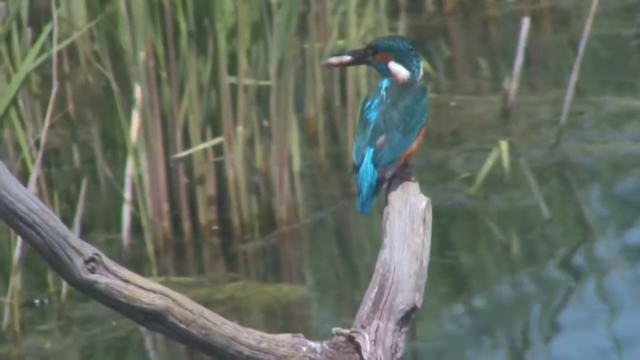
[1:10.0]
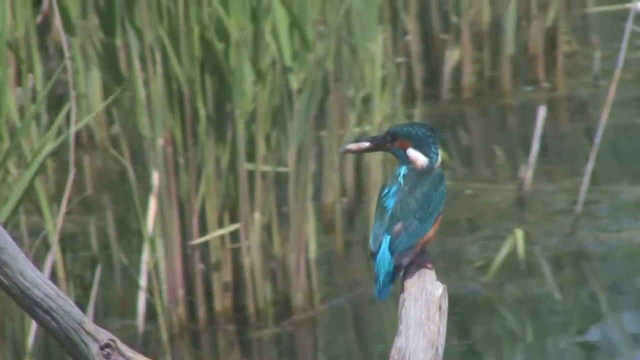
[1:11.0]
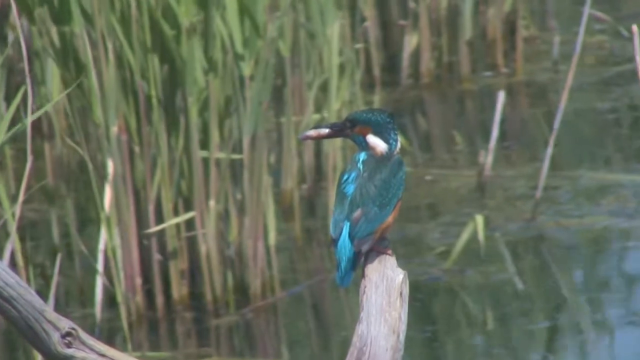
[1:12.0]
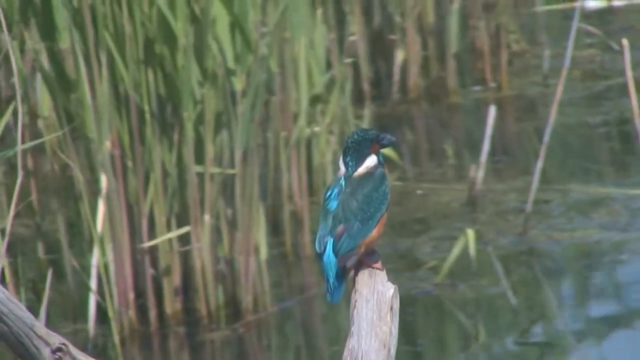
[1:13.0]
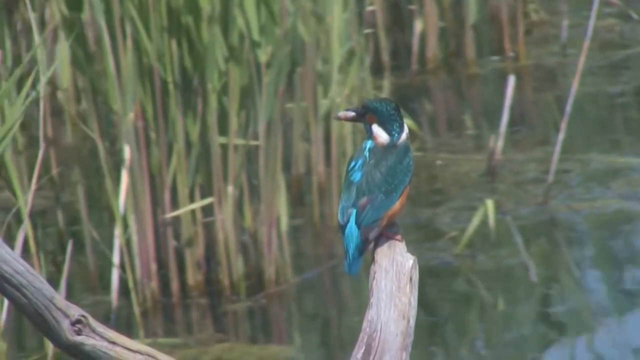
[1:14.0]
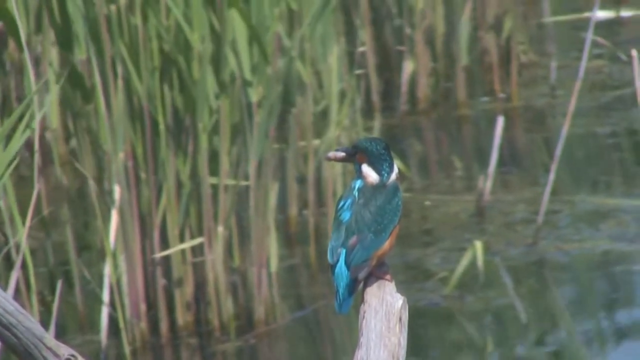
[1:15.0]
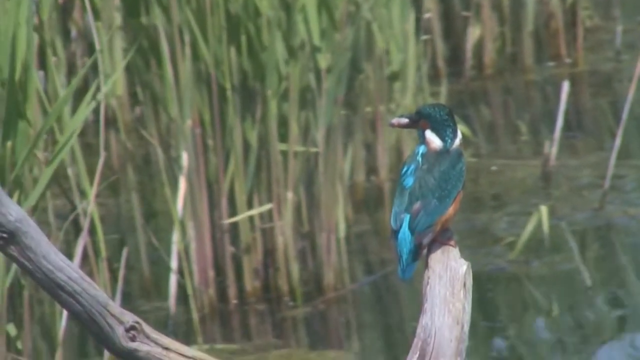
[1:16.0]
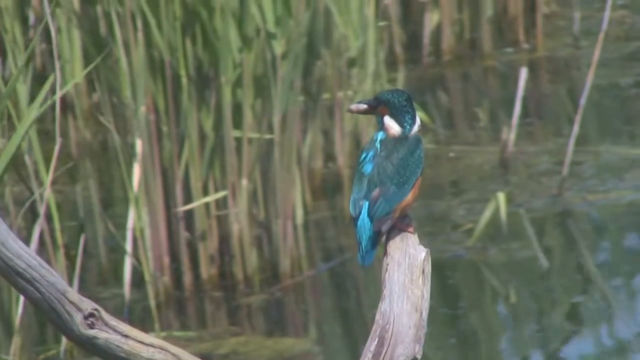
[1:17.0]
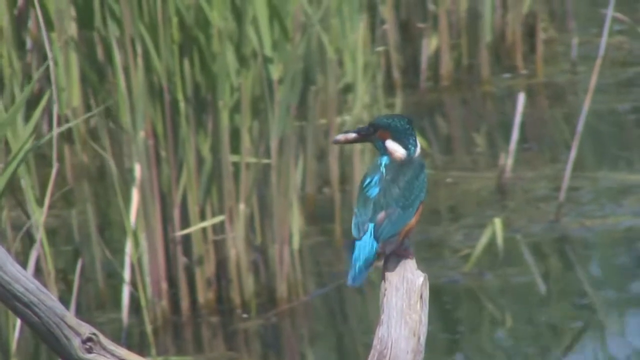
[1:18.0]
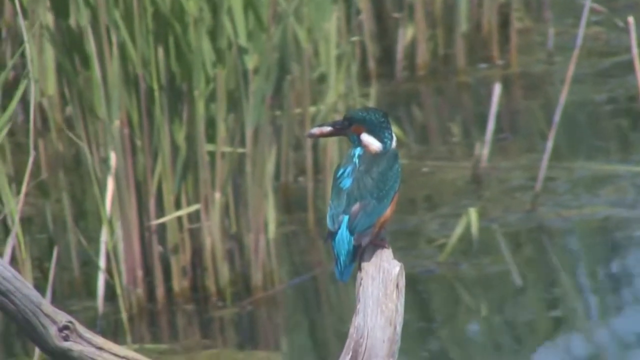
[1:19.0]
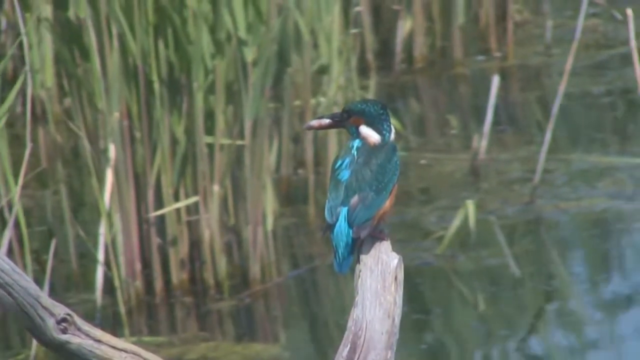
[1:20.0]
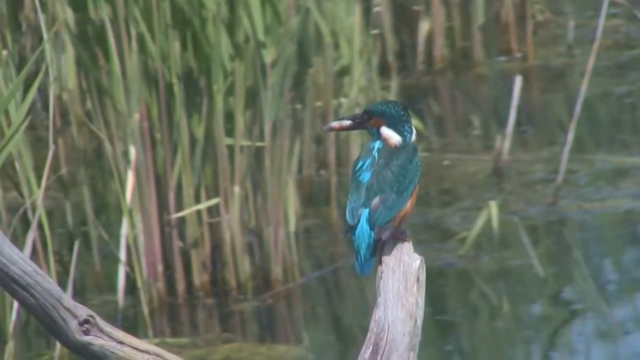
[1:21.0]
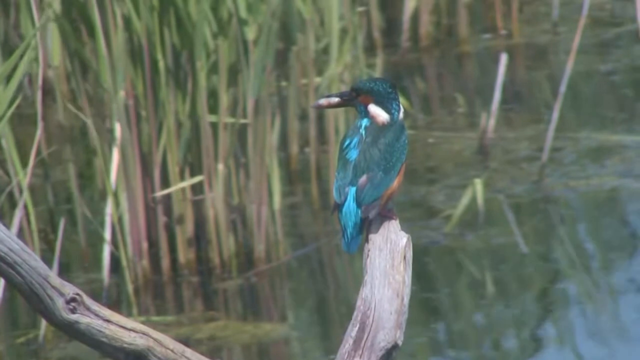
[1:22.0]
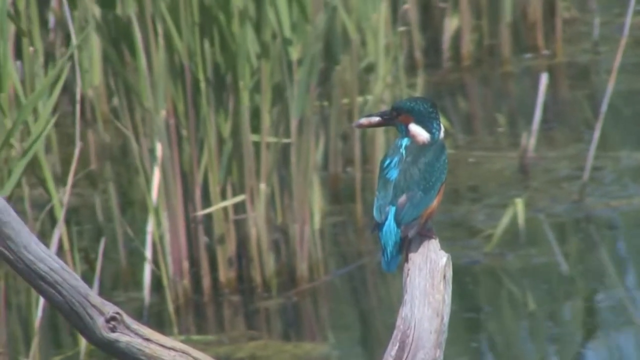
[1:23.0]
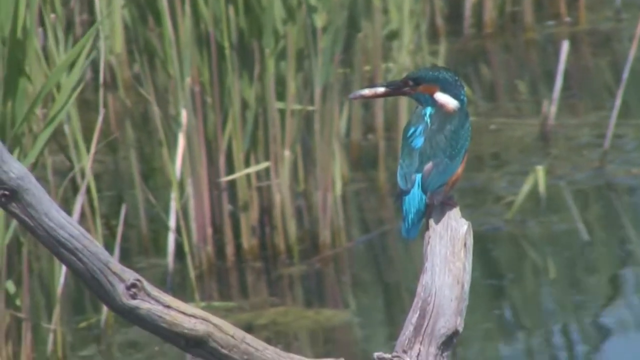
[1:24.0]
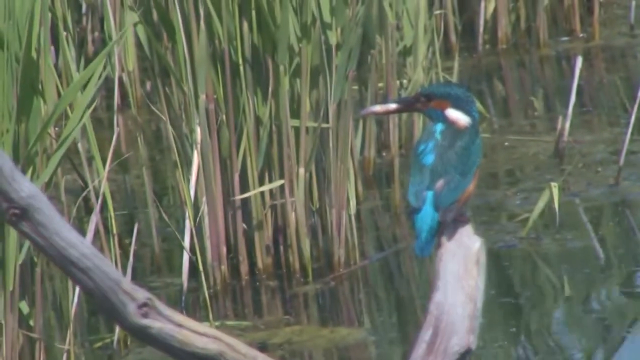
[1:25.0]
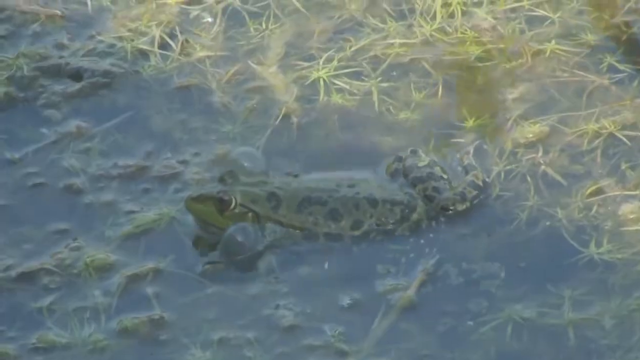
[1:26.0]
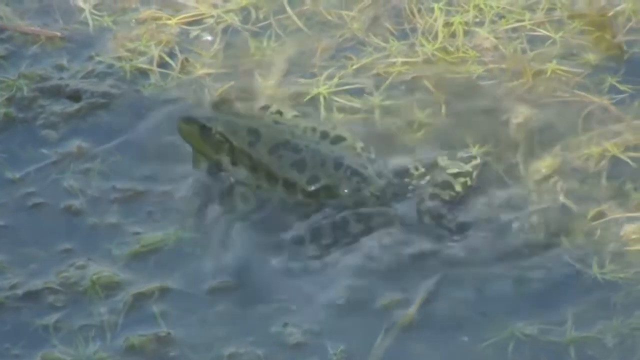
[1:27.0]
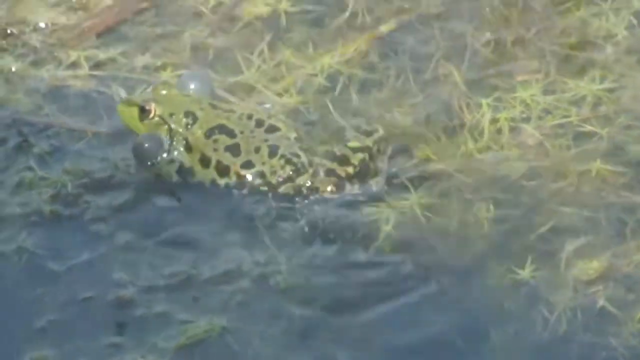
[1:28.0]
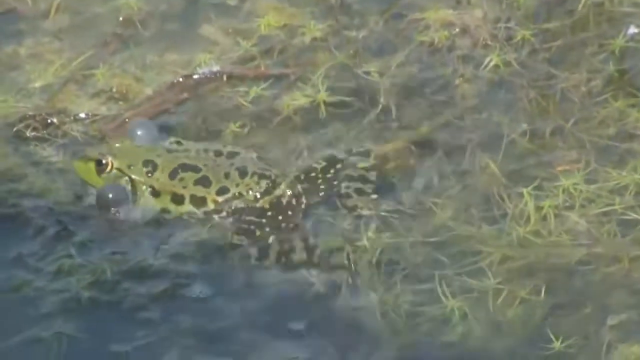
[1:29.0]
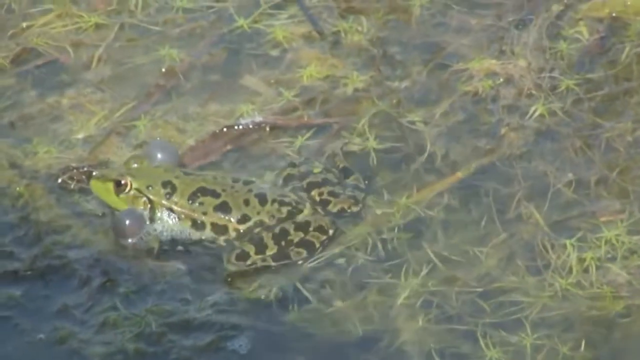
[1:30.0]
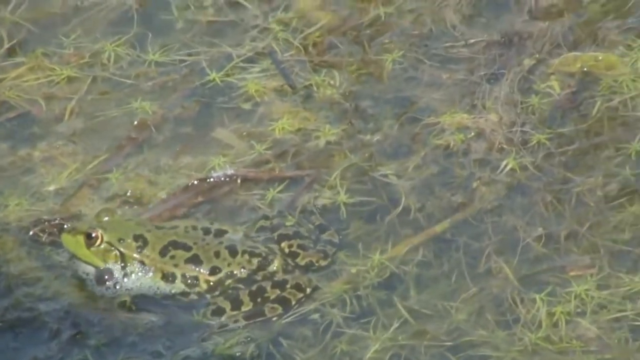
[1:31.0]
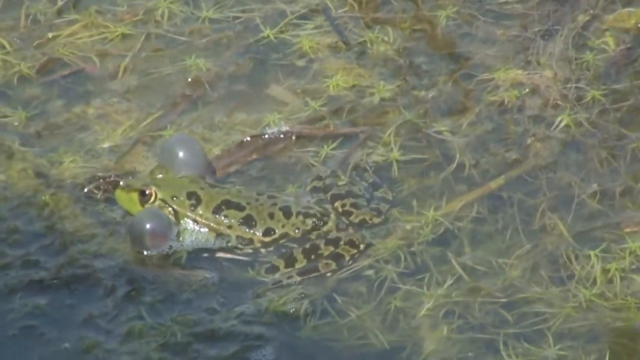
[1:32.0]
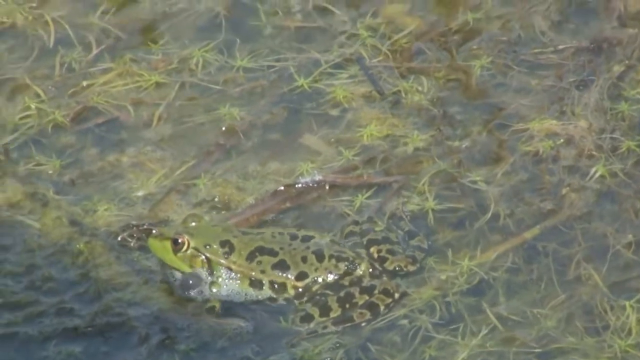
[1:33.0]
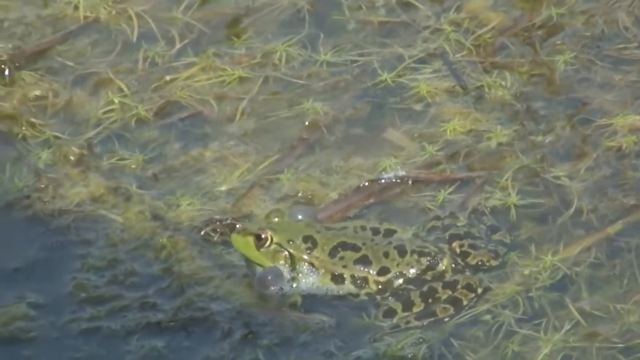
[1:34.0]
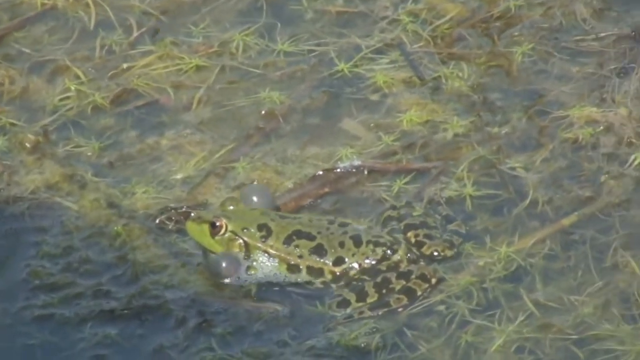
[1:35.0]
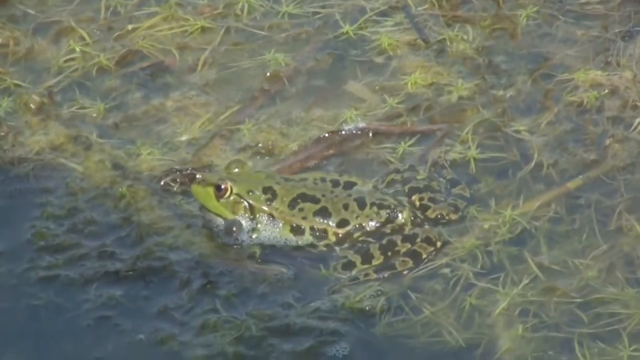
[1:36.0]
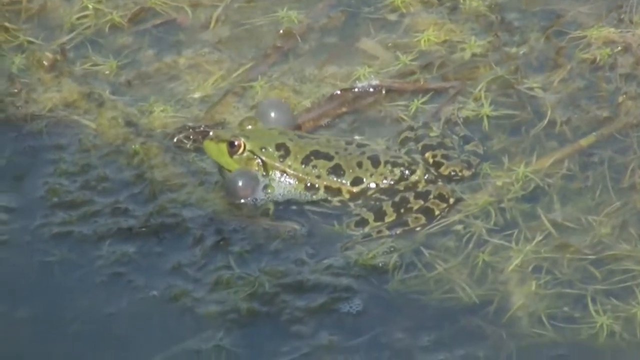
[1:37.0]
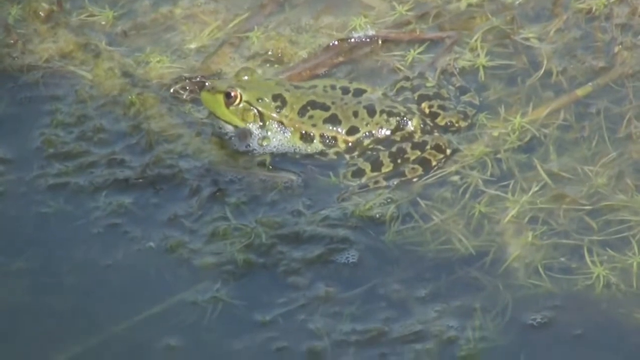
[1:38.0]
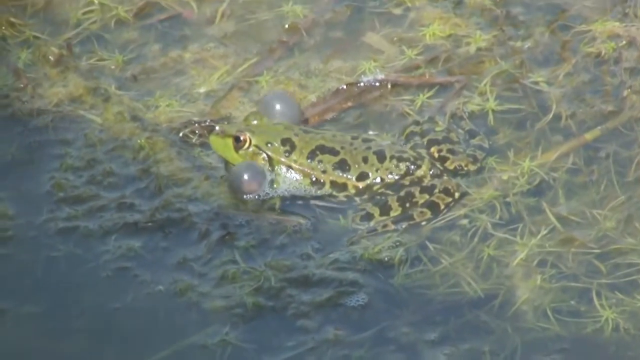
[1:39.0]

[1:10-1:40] A kingfisher is on part of a tree, looking into the water, with big, tall green reeds in the background. It is a variety of colours: blue, turquoise, light blue and some brown. Near the base of its head are some small white feathers; its head is mostly blue with a little brown near its eye, and its beak appears to be both black and white. The kingfisher looks from side to side as it sits above the water, bobbing and jumping around a little on the piece of wood without moving very far, and turning further to its left. The scene then changes to a completely different animal, a frog moving slowly through water that seems to contain a lot of plant life or grass. The frog is clearly visible. As it breathes, bubble-like sacs, like lungs or gills, rise, inflate and subside as it moves, and eventually it stops in place. The frog is mostly green with some black markings.